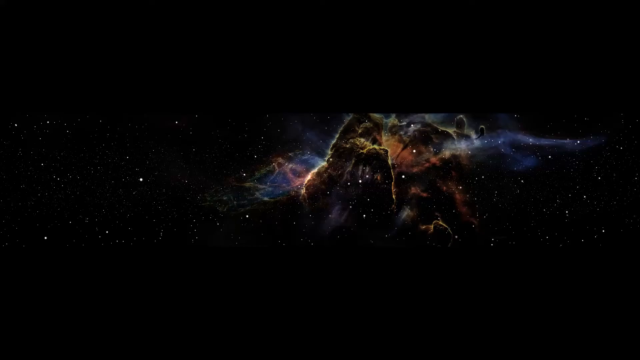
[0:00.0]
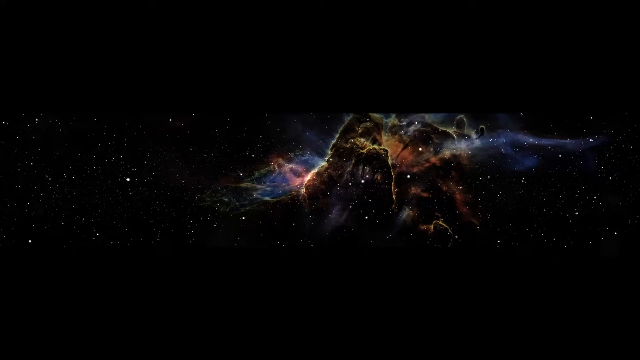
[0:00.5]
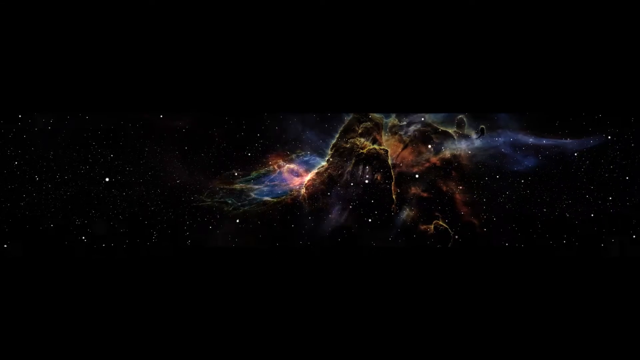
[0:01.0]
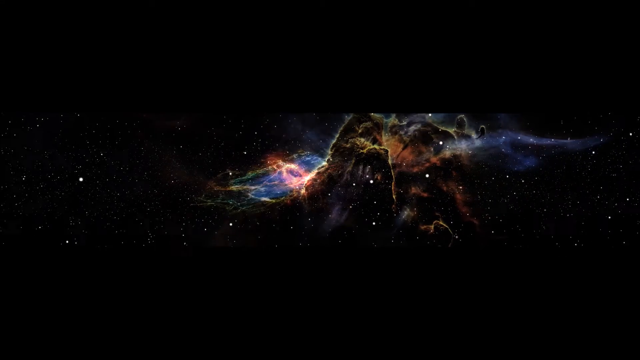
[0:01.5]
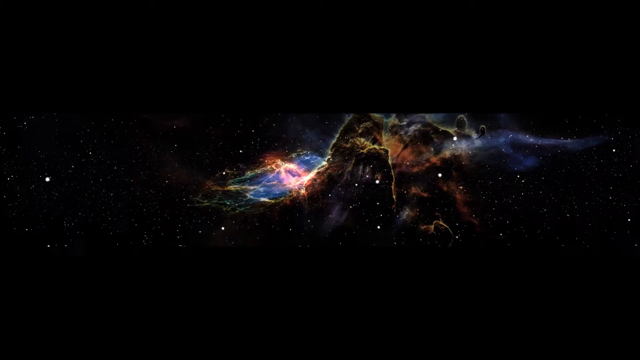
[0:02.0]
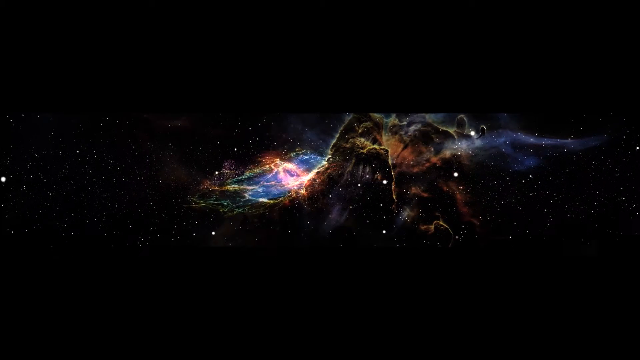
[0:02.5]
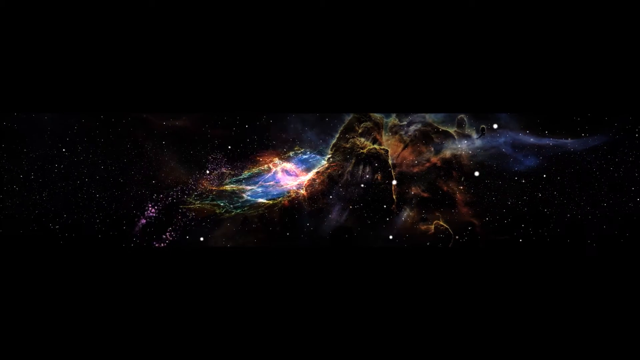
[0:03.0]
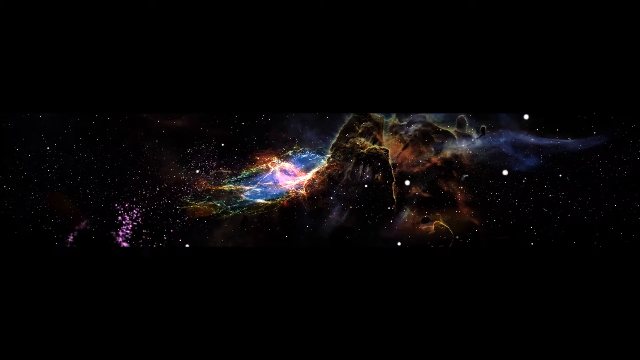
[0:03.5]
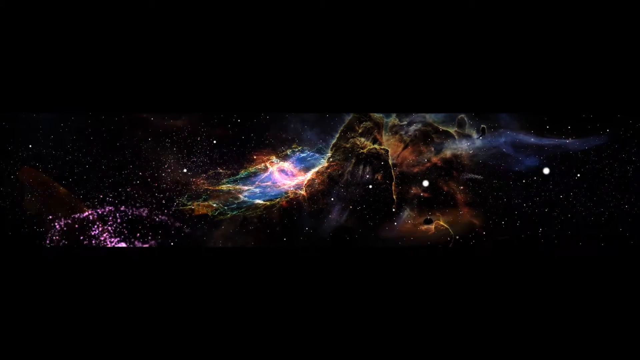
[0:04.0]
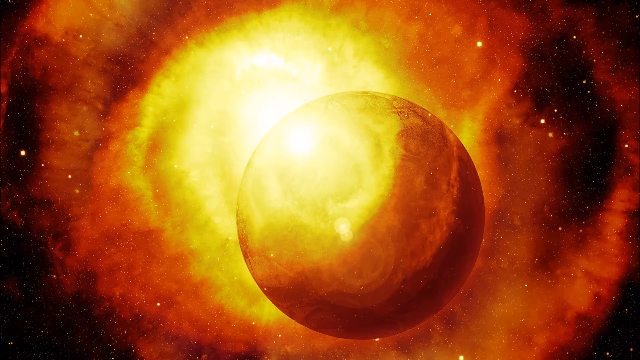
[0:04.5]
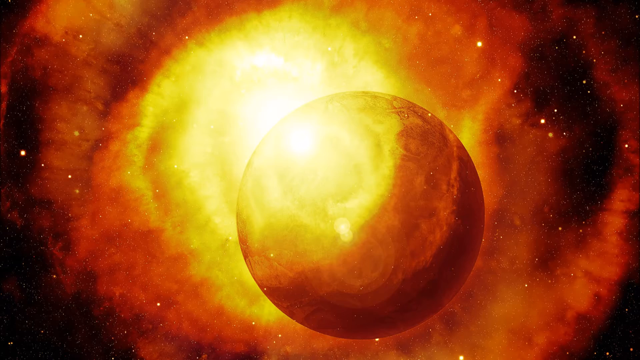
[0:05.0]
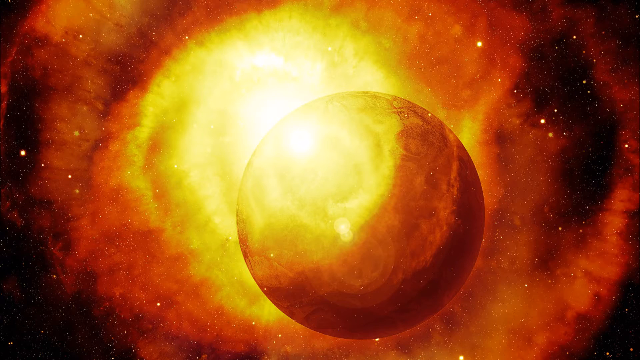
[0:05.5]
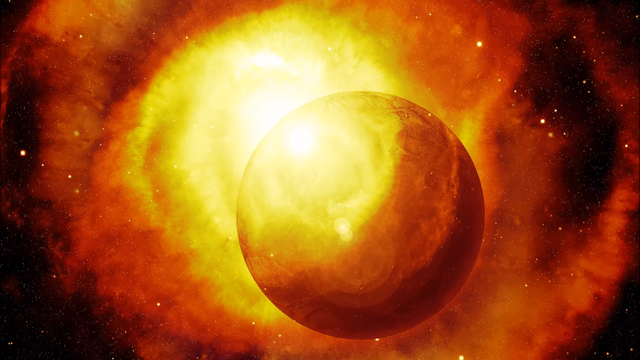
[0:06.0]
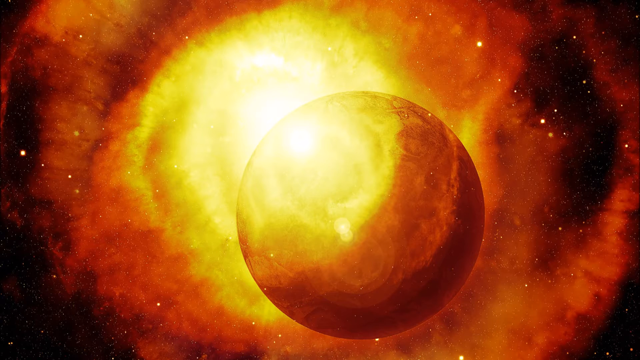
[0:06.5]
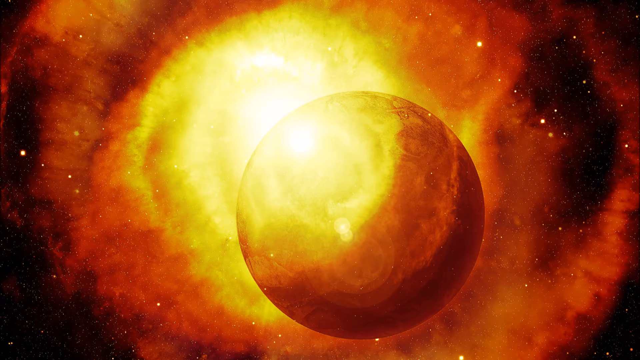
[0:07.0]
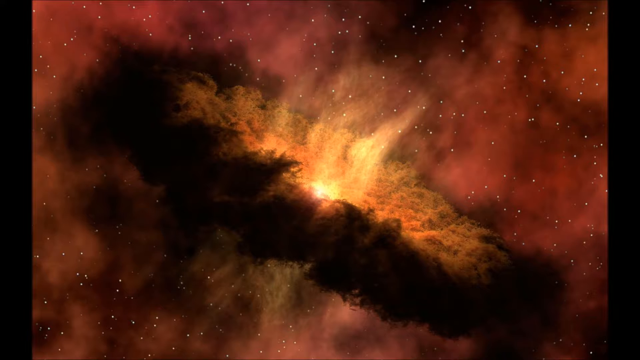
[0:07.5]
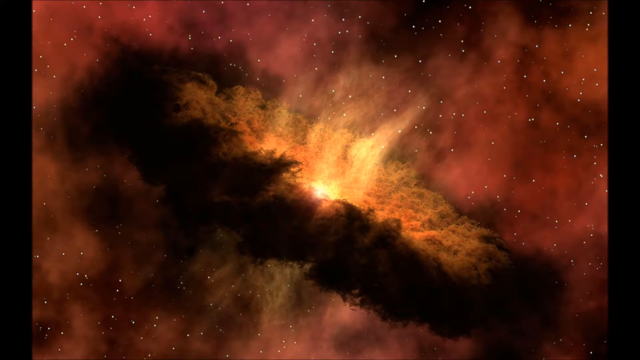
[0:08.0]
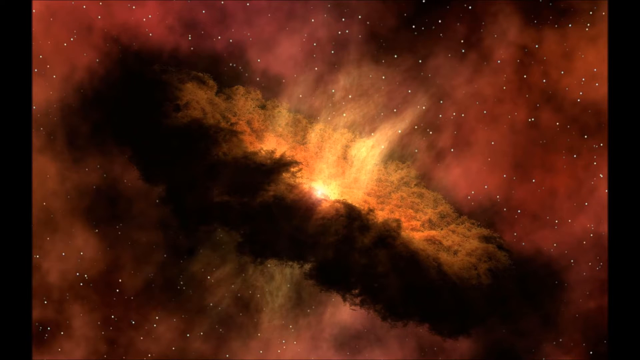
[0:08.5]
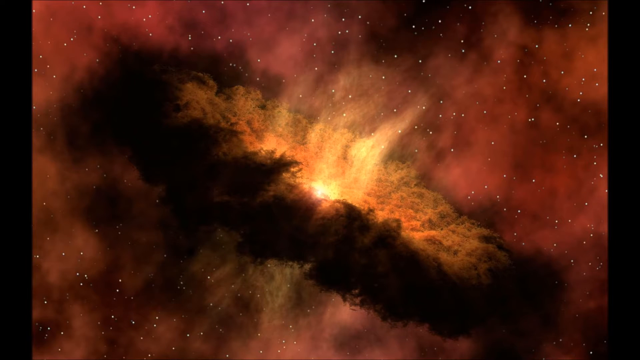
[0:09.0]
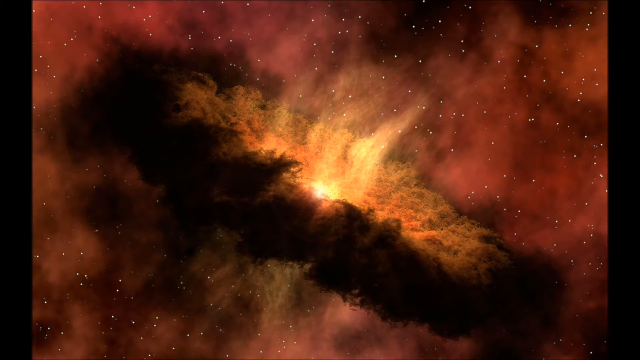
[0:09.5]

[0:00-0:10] The video opens with an animation that looks to be set in outer space. White particles move closely toward the camera at an angle, and in the far background there appears to be a segment of colors shaped in different waves and lines, looking like a type of galaxy. It then transitions to a couple of still shots of planets in the solar system, ranging in color from purple and red to brown and yellow. The entire video is computer generated and rectangular in shape.